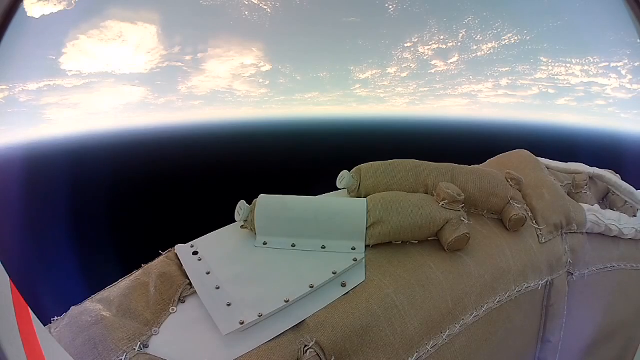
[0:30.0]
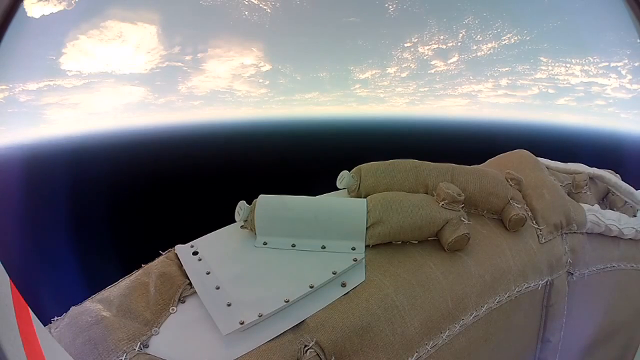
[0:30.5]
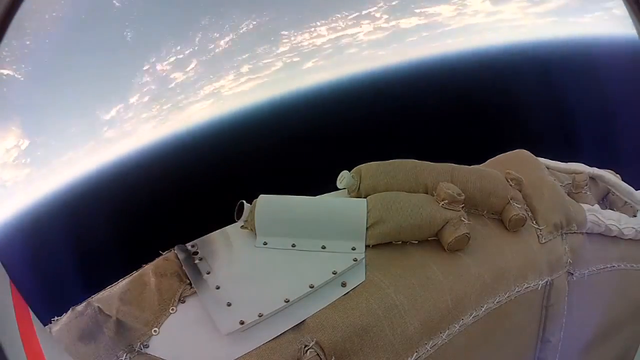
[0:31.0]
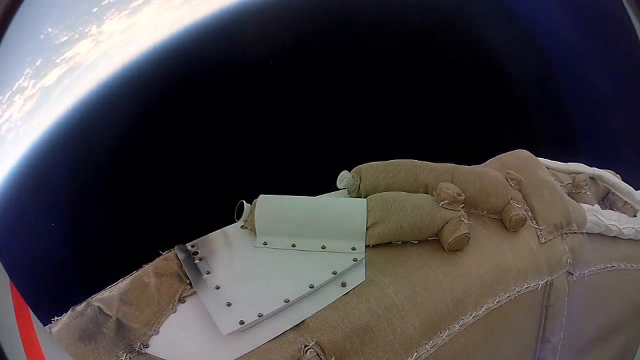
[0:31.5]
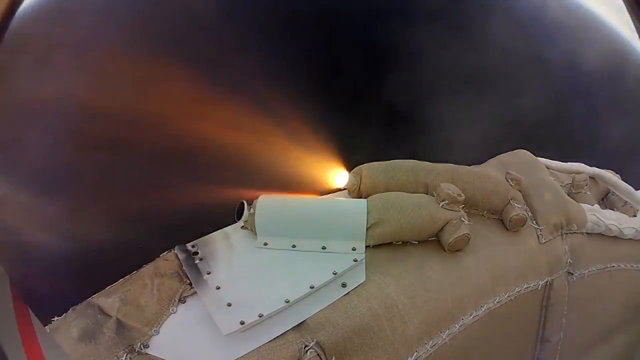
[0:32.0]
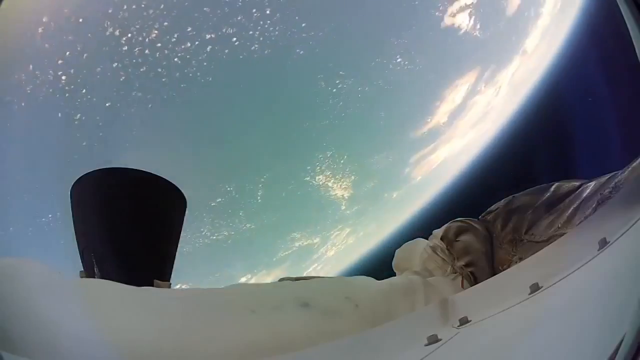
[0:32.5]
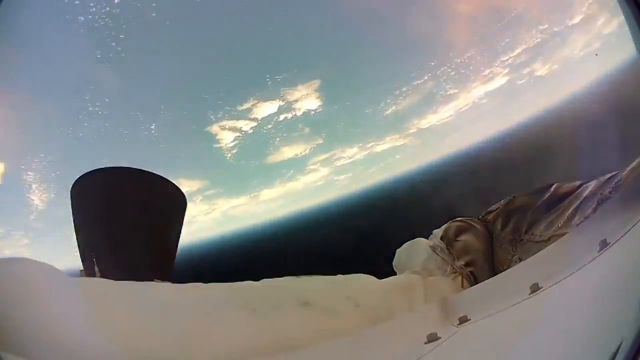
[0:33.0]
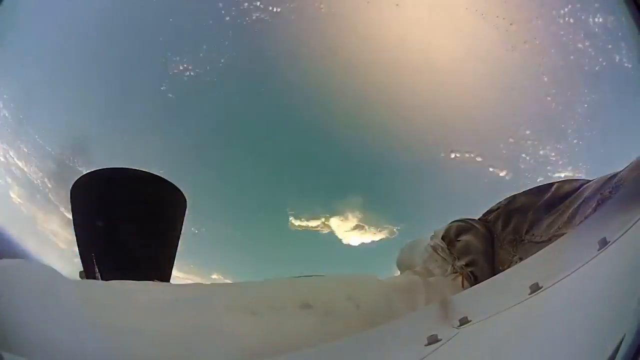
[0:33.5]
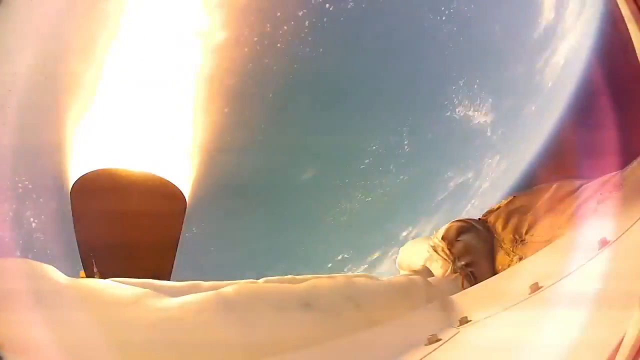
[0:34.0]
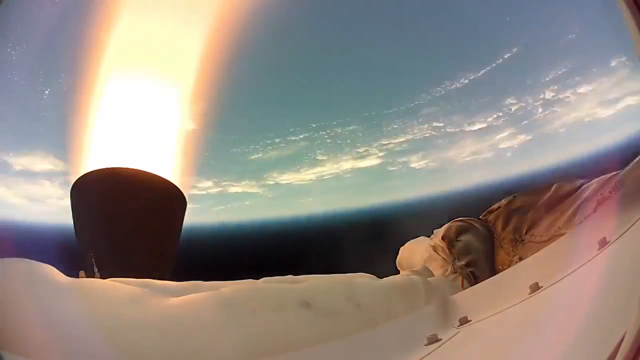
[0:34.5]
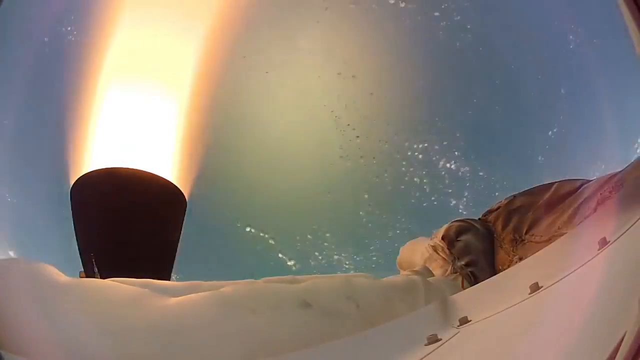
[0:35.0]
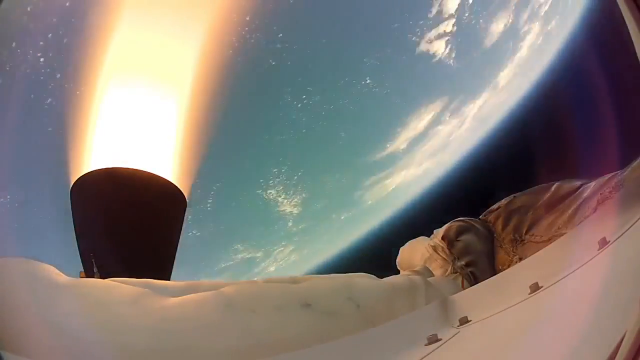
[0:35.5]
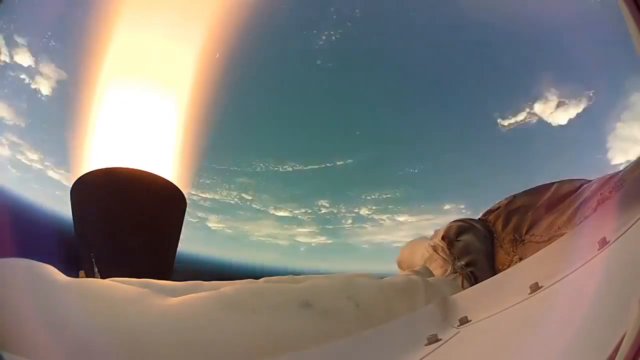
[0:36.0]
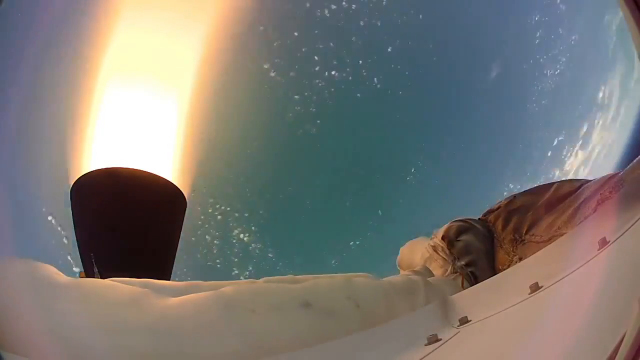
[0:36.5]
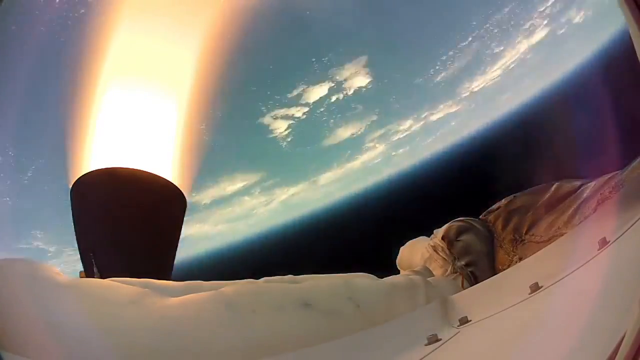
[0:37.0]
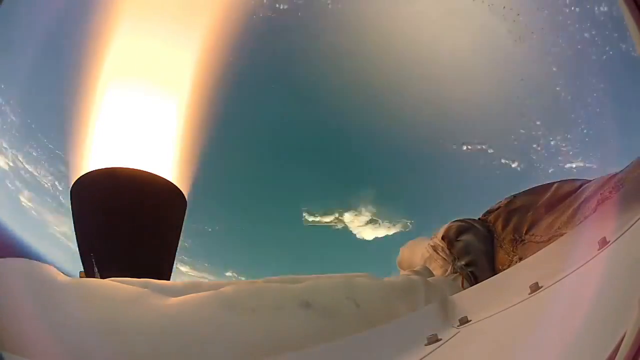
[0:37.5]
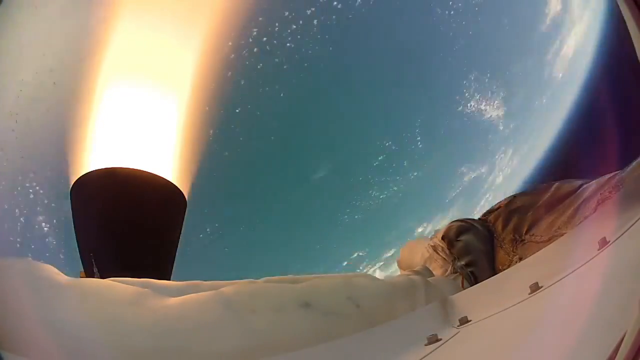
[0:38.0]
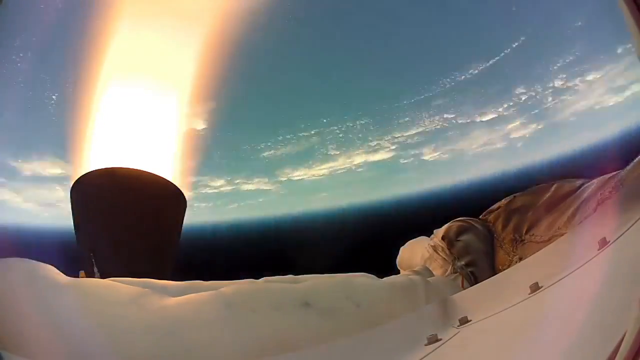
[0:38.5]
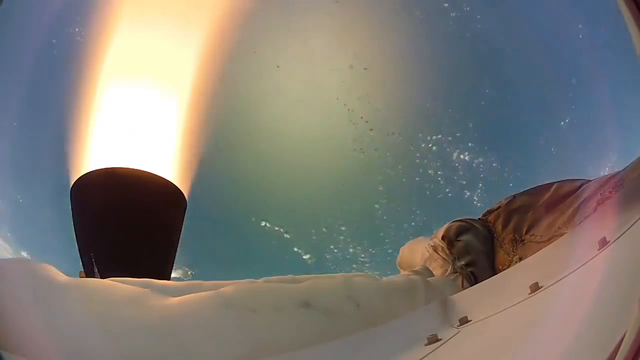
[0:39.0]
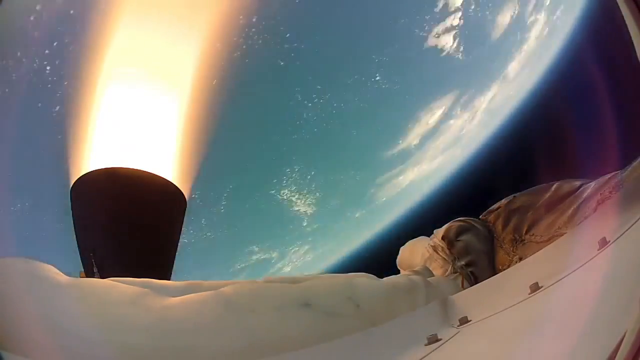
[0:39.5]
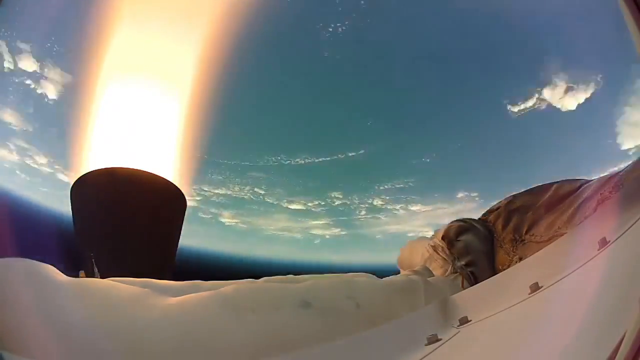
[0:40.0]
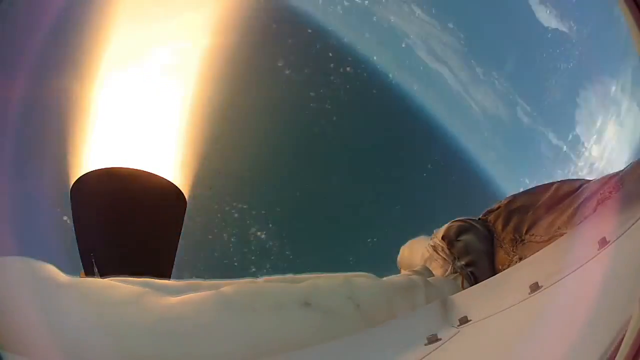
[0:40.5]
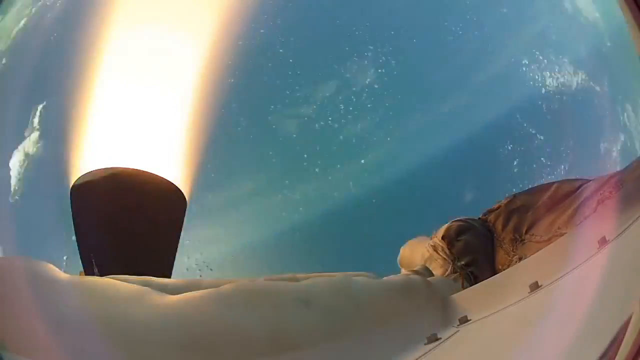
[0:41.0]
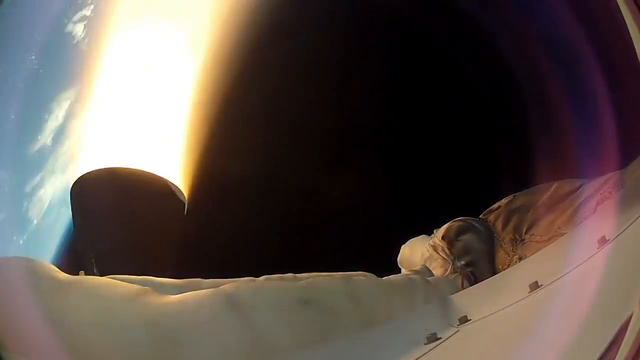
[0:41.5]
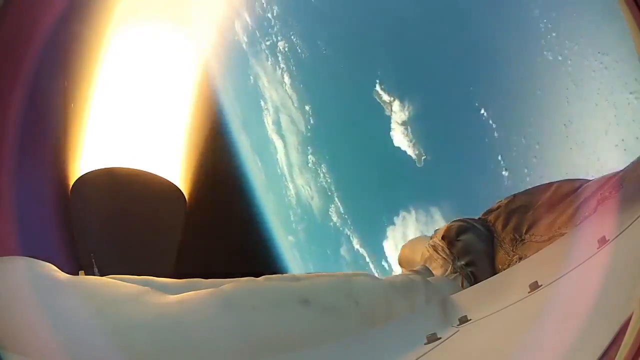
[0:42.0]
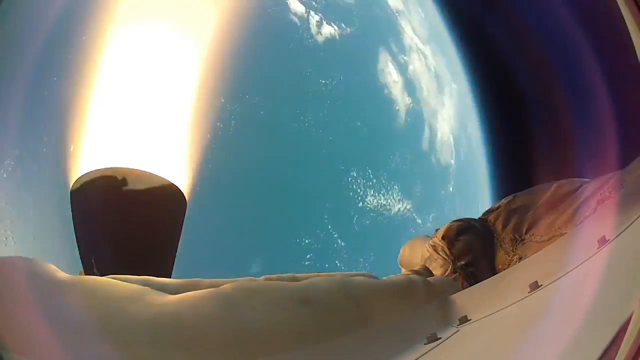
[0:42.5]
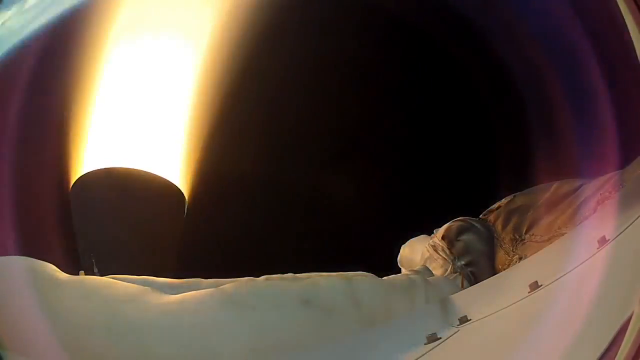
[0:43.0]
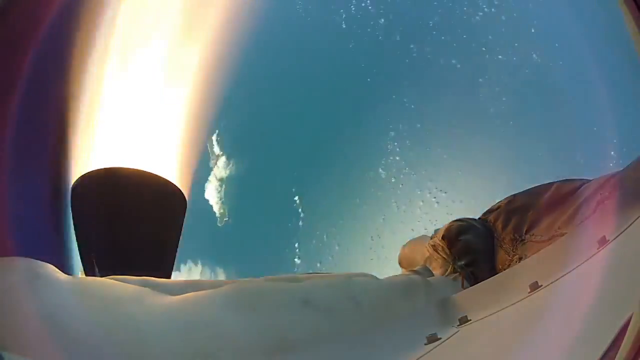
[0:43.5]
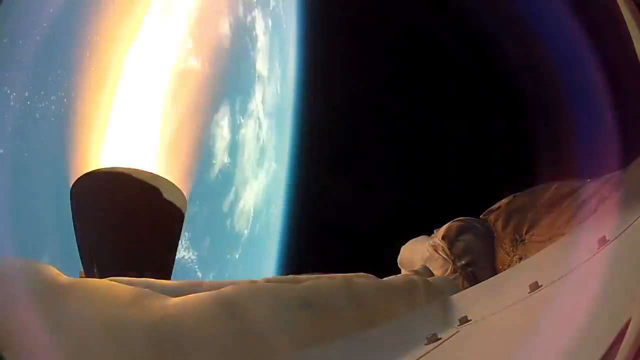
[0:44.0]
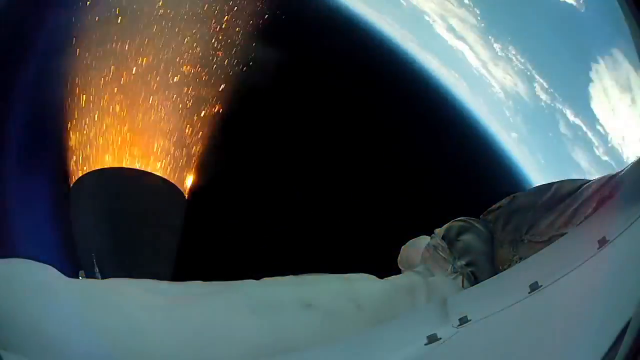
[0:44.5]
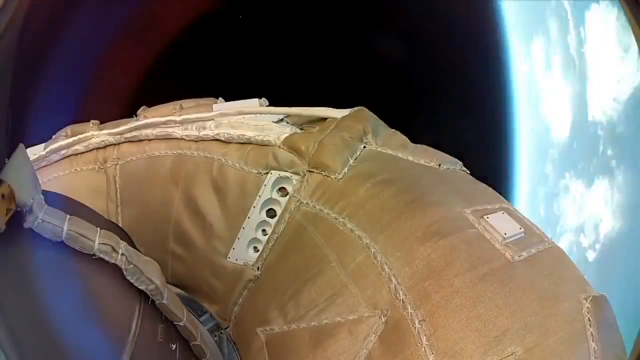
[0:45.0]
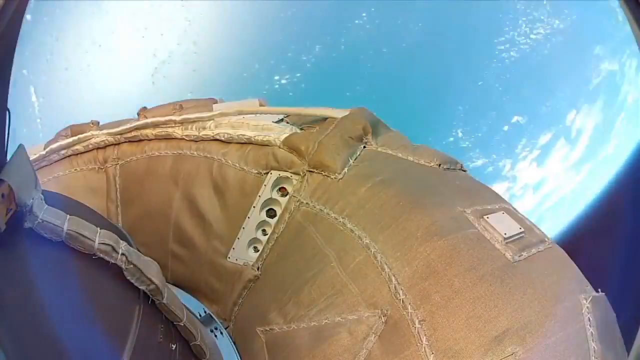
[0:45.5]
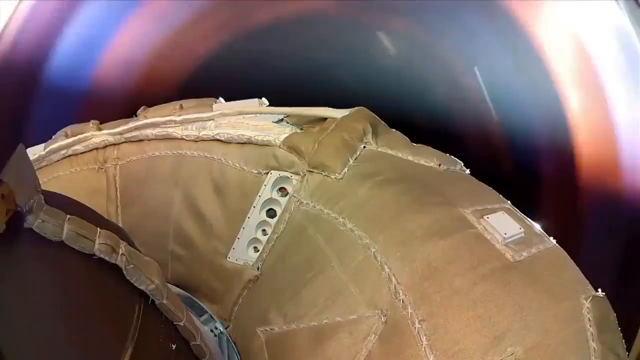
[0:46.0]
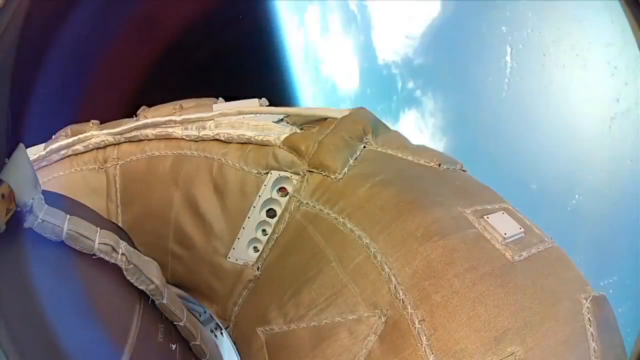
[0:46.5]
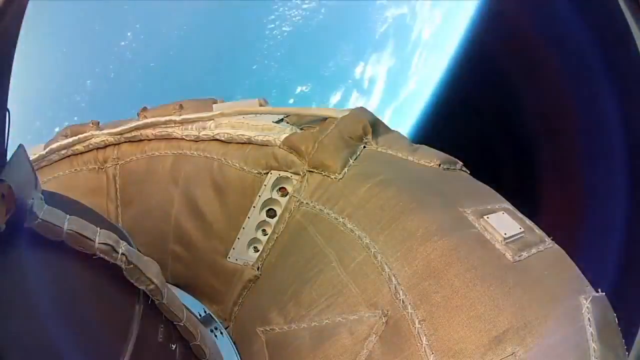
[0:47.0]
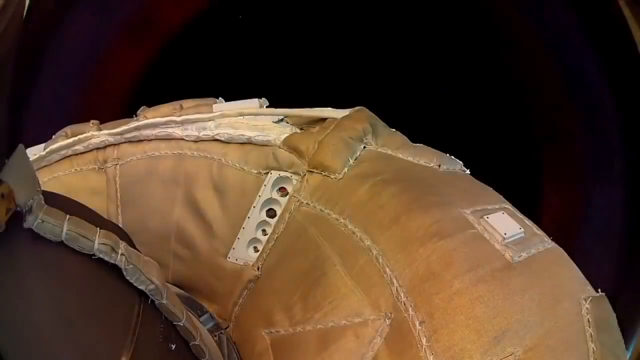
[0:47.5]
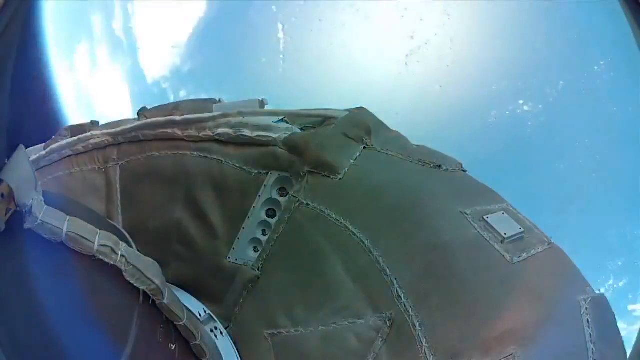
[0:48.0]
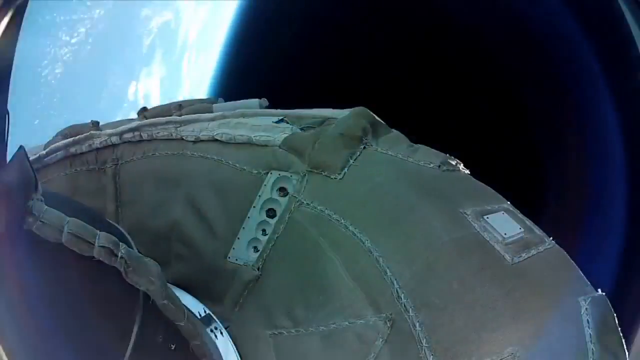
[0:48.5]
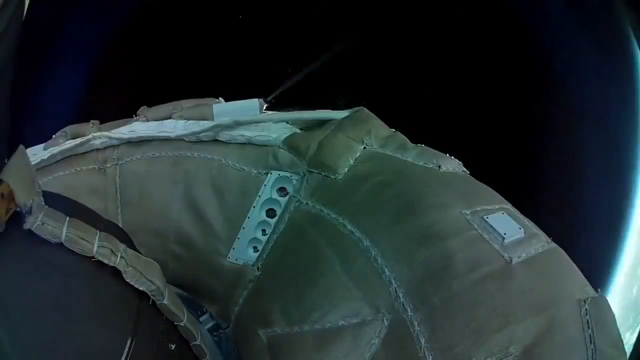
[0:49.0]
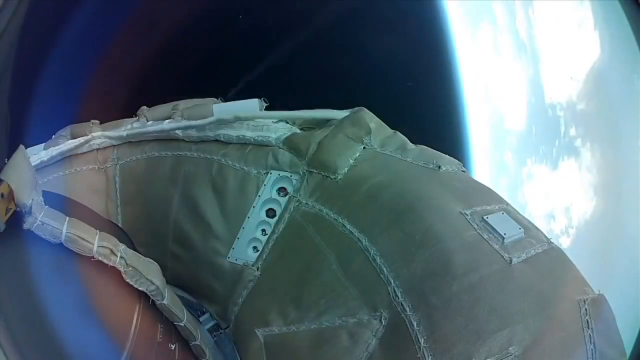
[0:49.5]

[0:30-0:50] The image begins to spin. The Earth spins in the background as a thruster goes off, and a different angle shows the Earth spinning very fast as the thruster keeps firing. The blackness of space is visible as the Earth spins underneath the balloon from this angle. Part of the device is at the bottom of the screen, covered in something like brown burlap or brown material, with many rivets holding the metal together. The thruster shows an orange glow of fuel coming out, and tiny other thrusters seem to be controlling it, maybe making it spin more and more. Clouds are visible in the atmosphere down below, and light reflects off the camera lens in a kind of circular shape around the recording.